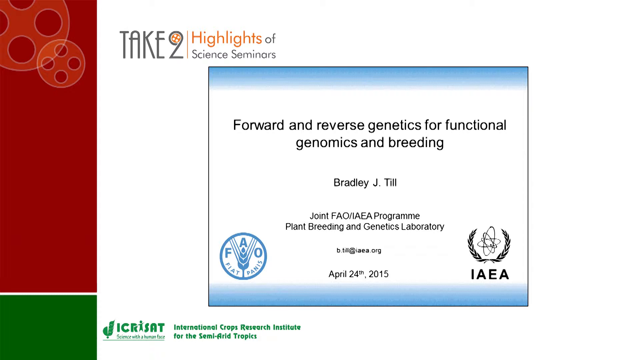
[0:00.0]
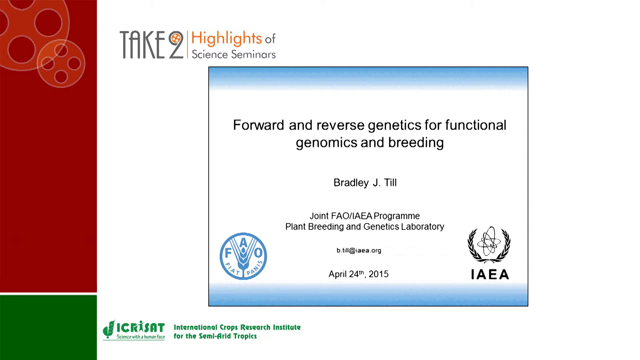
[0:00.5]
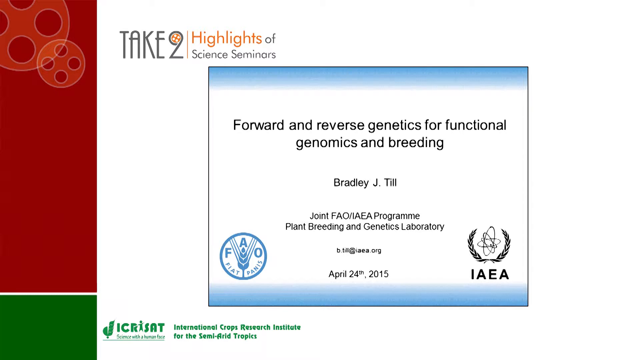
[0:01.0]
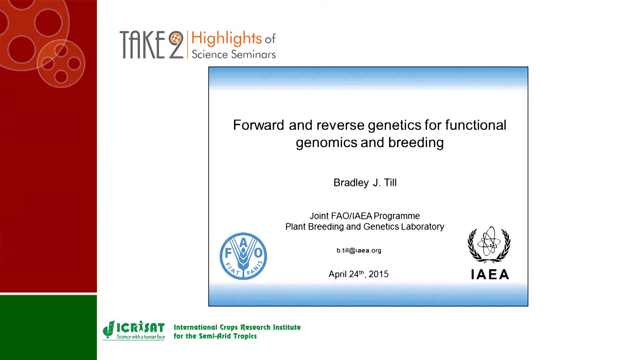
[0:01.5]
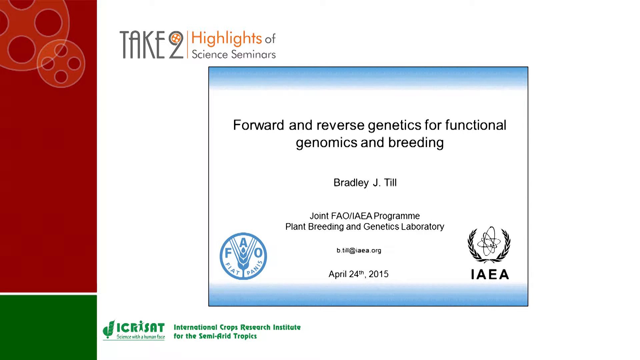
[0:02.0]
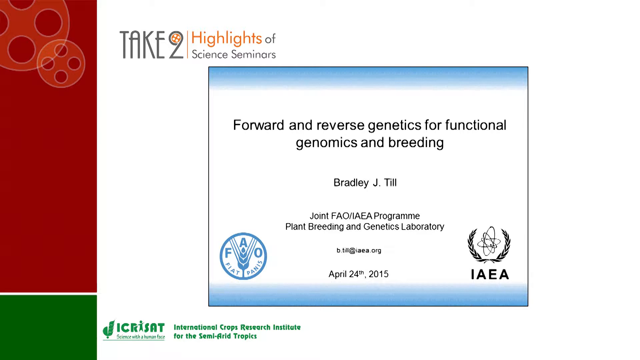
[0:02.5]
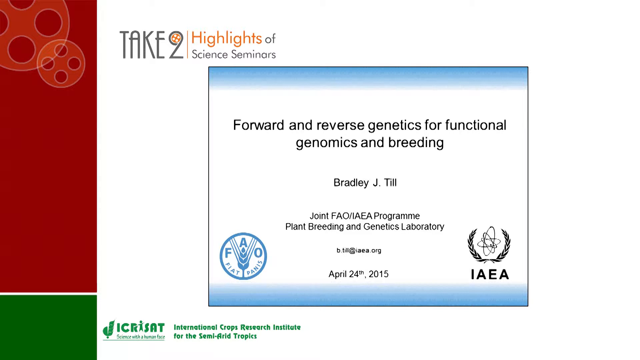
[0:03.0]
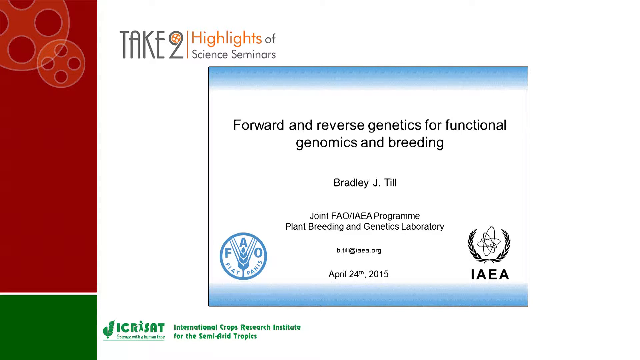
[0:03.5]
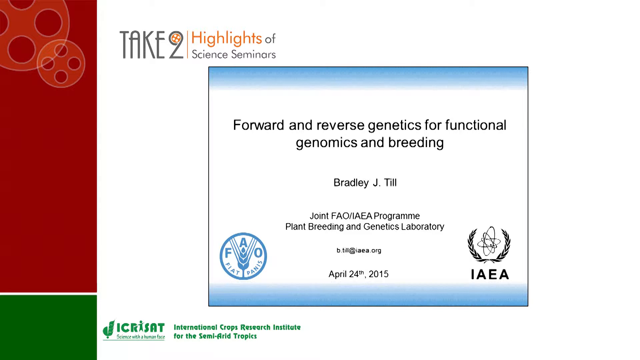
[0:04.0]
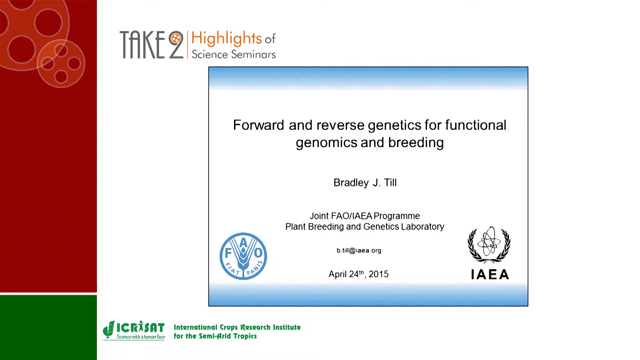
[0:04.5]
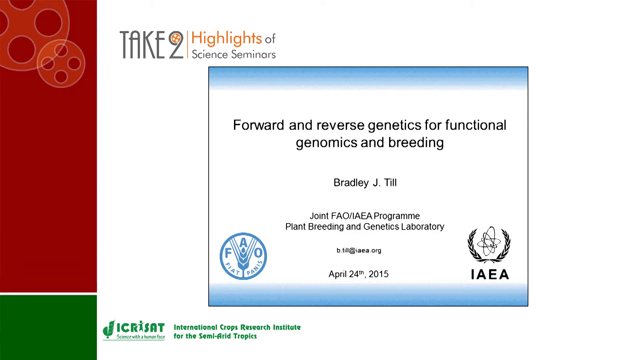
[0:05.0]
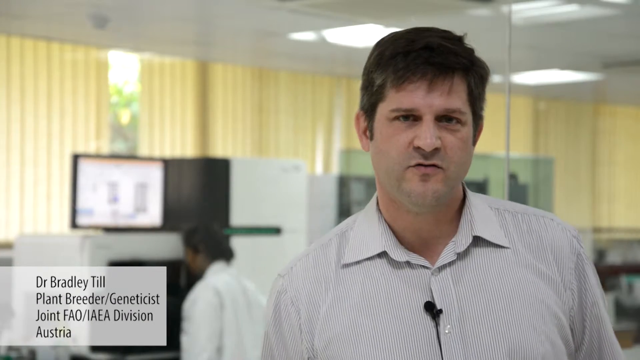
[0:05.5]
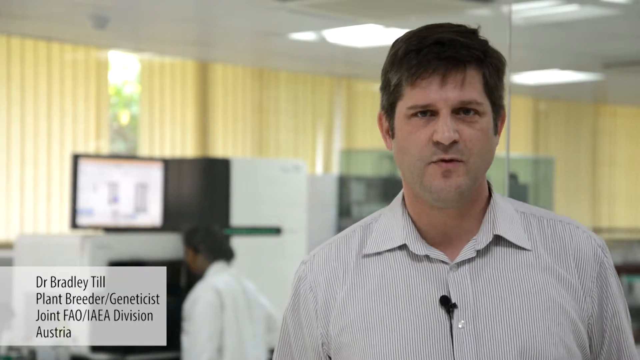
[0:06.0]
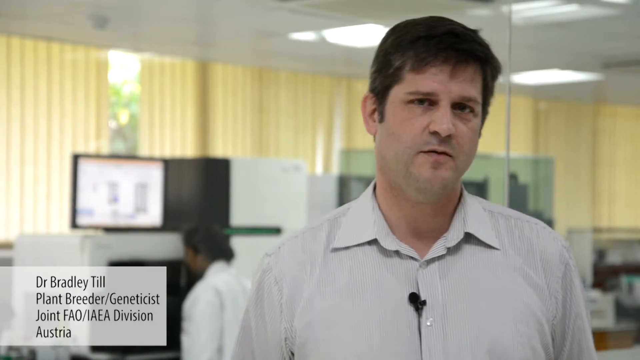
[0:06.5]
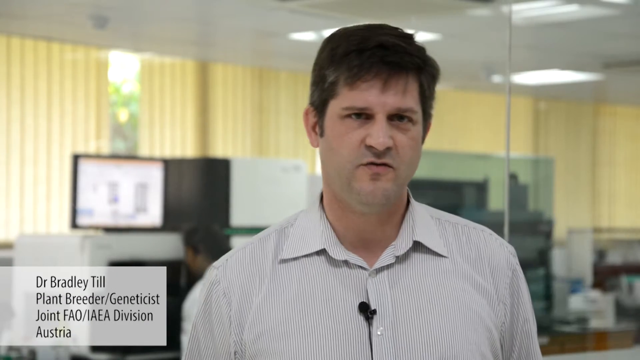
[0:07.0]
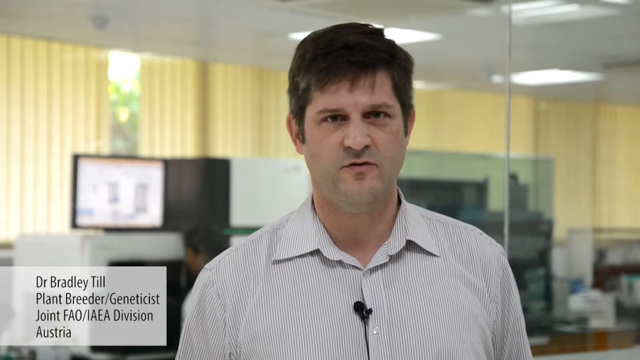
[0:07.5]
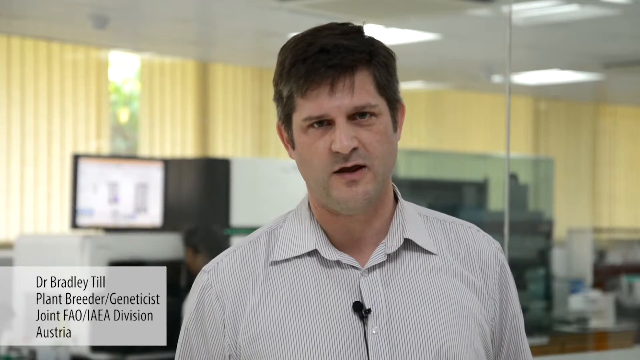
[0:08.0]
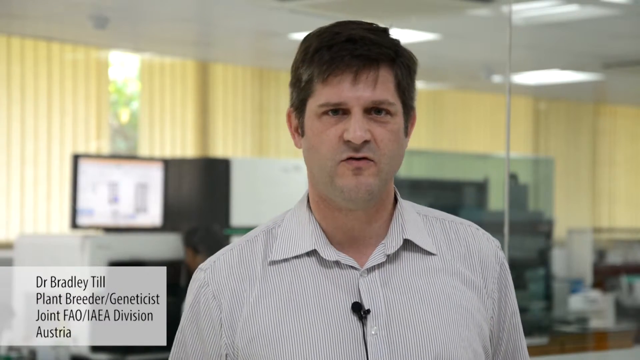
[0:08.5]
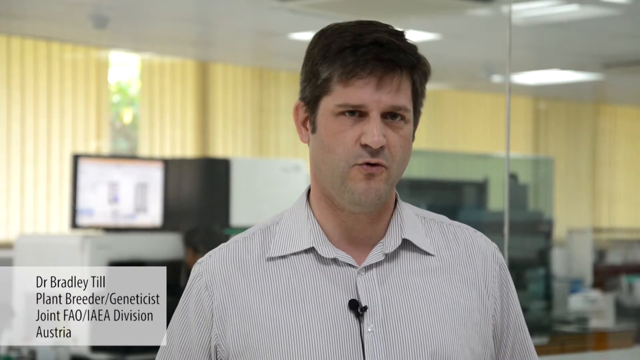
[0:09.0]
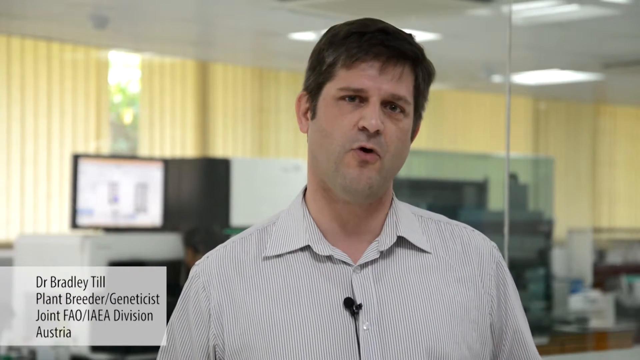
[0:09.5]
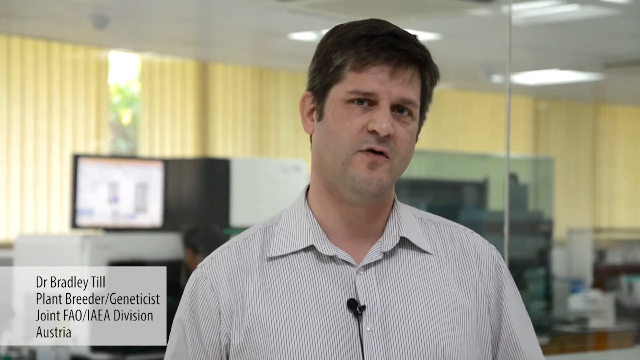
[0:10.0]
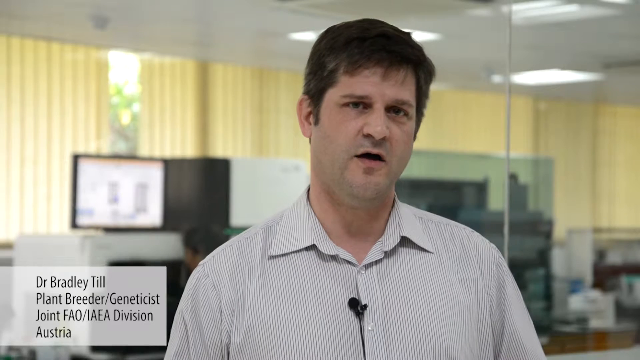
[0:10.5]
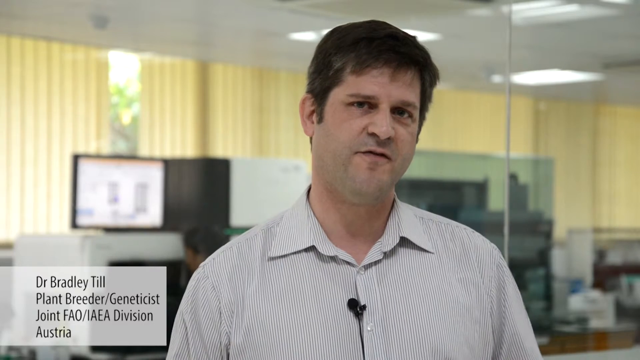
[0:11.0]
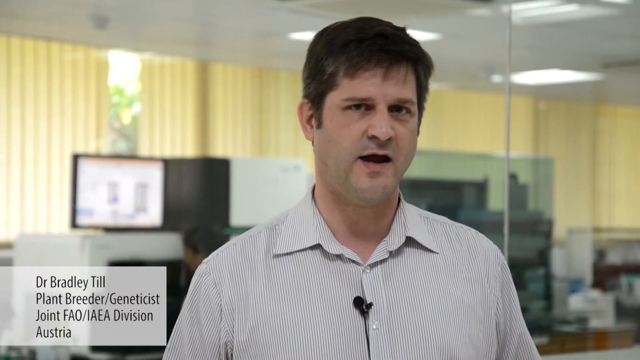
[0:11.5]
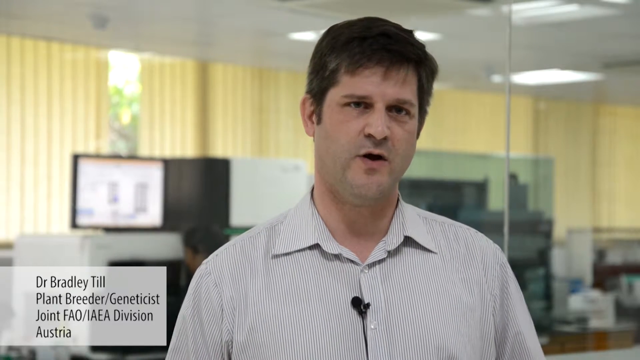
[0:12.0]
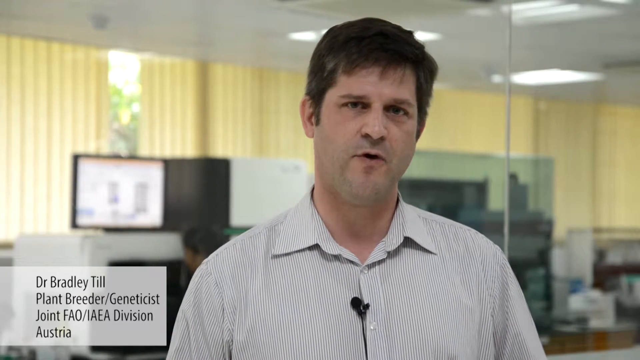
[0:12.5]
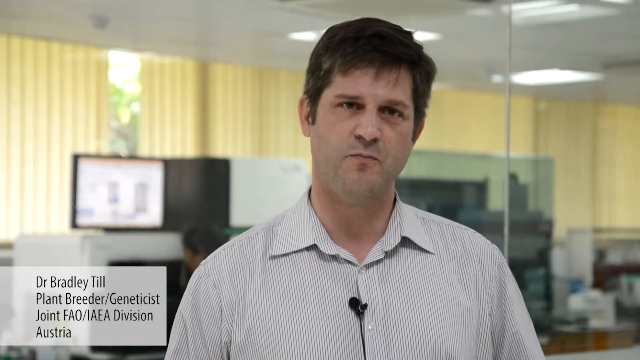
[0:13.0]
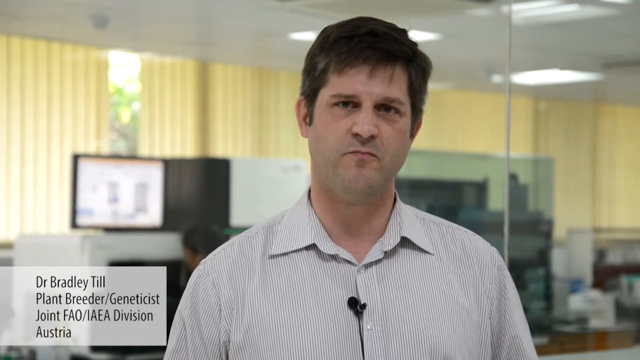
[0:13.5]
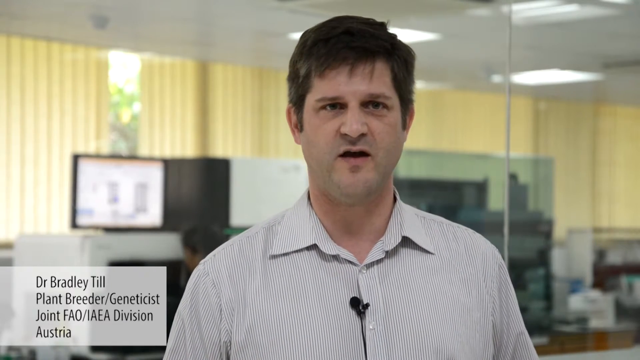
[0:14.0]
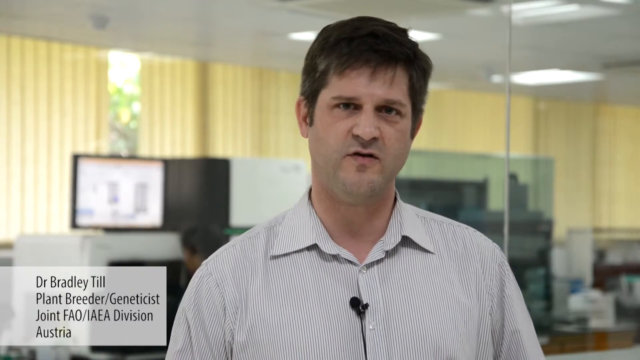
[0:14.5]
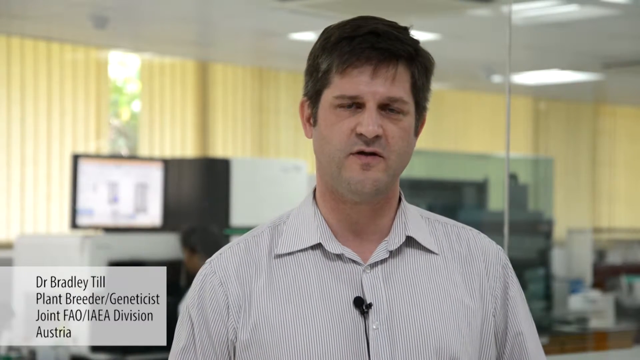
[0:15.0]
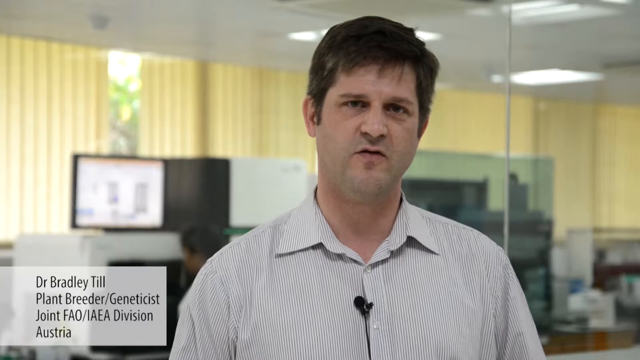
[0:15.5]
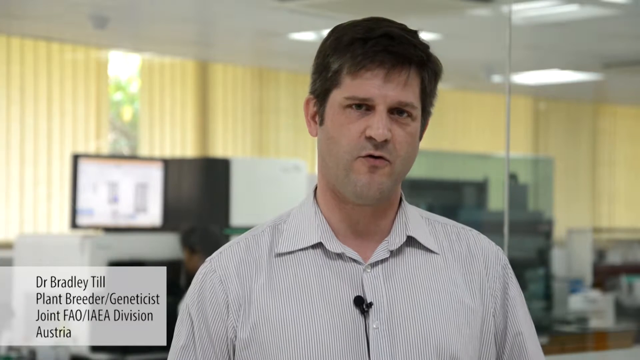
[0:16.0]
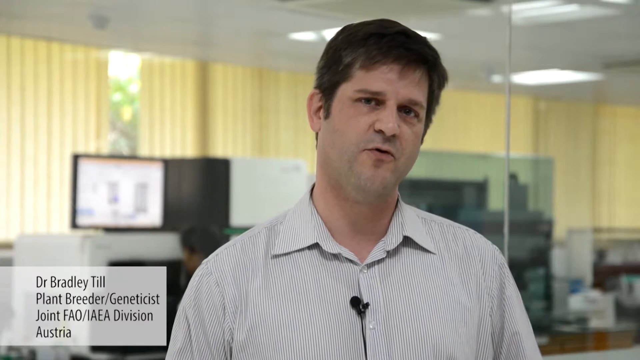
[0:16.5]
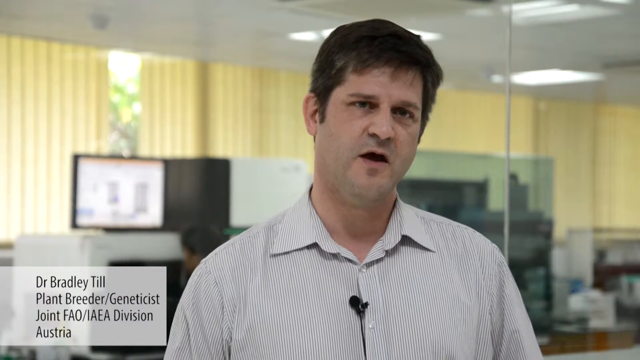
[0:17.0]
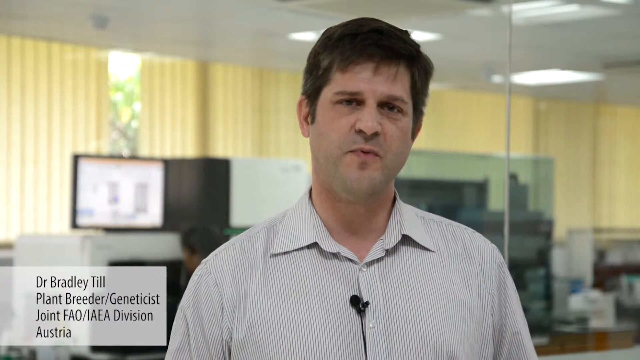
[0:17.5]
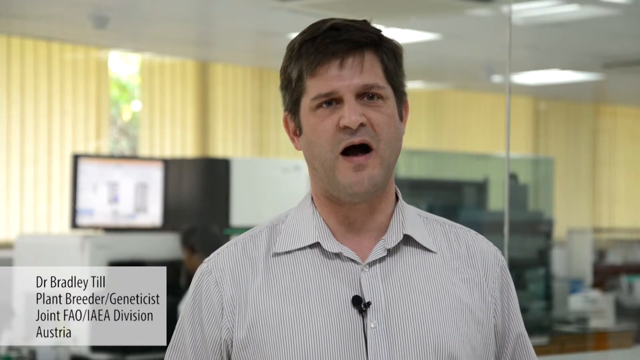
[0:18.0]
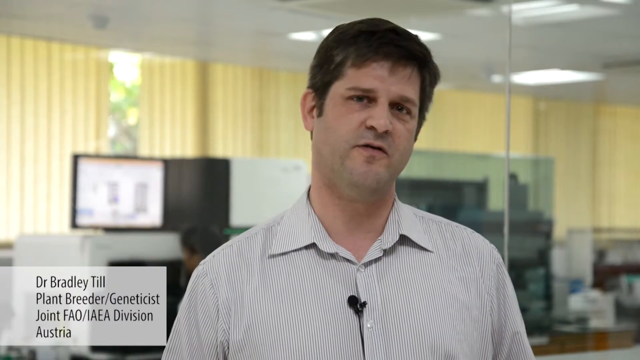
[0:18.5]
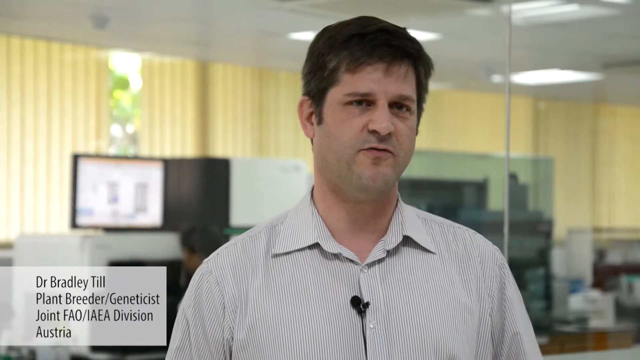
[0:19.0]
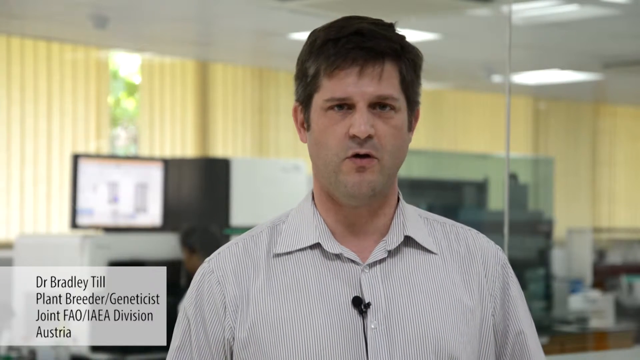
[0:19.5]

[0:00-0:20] A white screen reads "Take 2 highlights of science seminars" at the top. Below it is a large image of what looks like some sort of certificate. The certificate says "forward and reverse genetics for functional genomics and breeding", with the name "Bradley J Till" underneath, and below that "joint FAO/IAEA program, plant breeding and genetics library". It gives the date April 24th 2015. At the bottom of the screen is the logo for ICRSAT. The scene then changes to a man speaking to the camera, seen from the chest up. He has dark brown hair that is a little longer on top and shorter on the sides, and brown eyes, and wears a white button-up shirt with very thin light blue vertical lines. In the bottom left-hand corner, a small white block reads "Dr. Bradley Till, plant breeder geneticist, joint FAO/IAEA division, Austria".